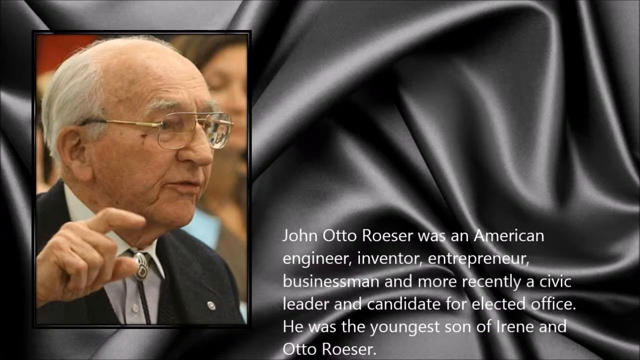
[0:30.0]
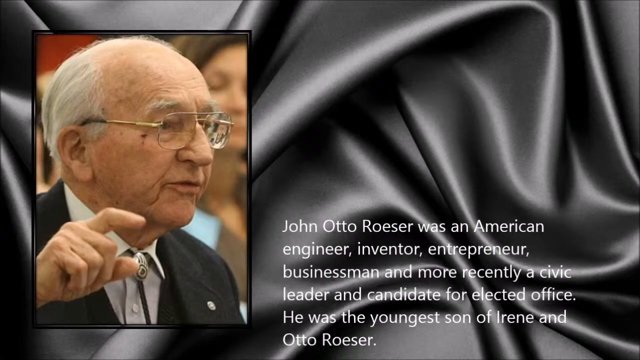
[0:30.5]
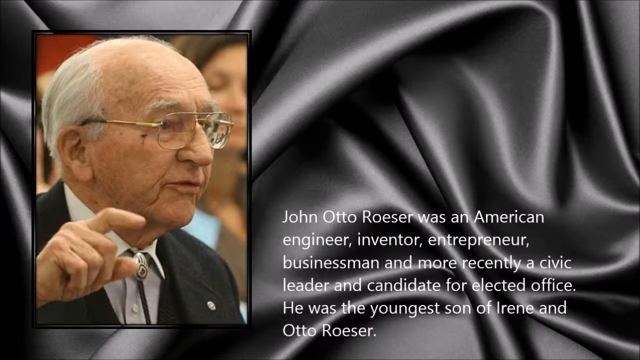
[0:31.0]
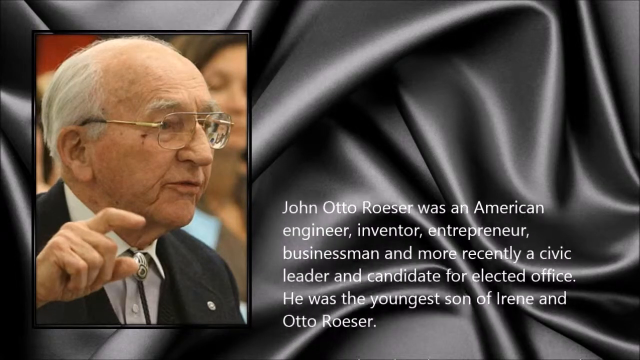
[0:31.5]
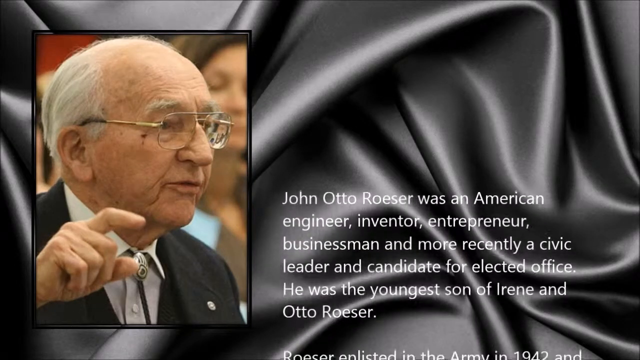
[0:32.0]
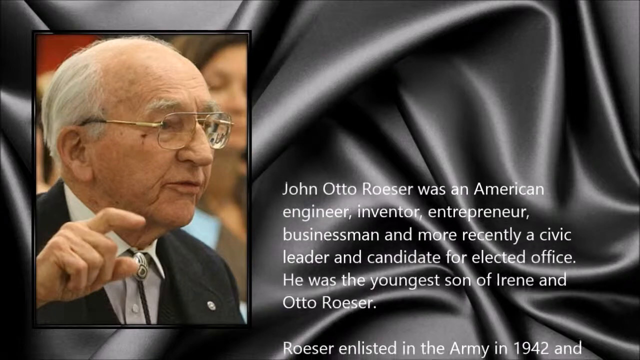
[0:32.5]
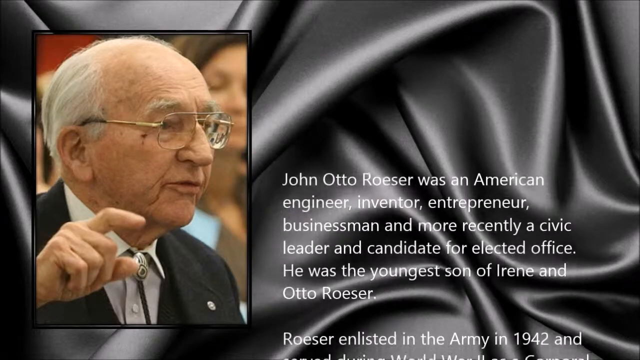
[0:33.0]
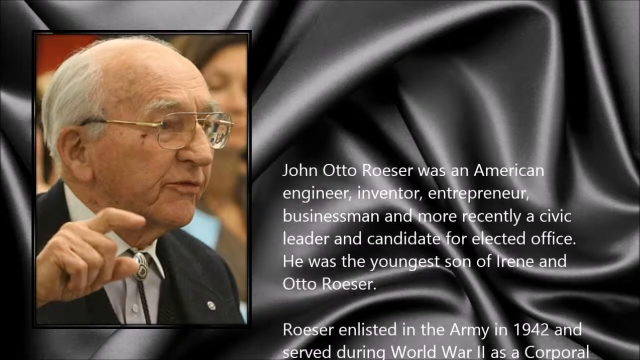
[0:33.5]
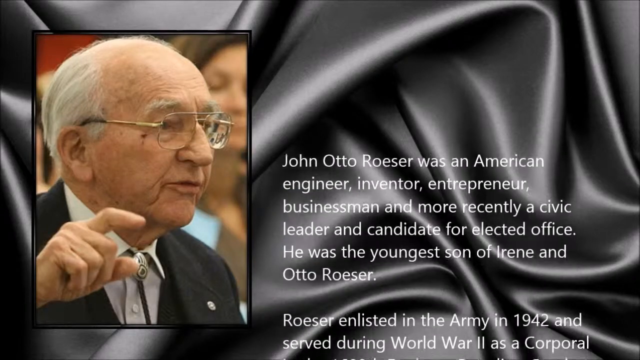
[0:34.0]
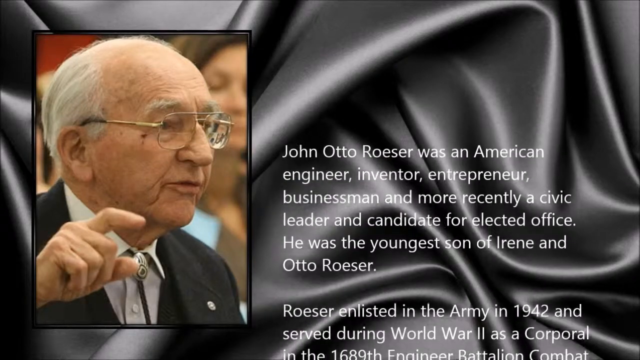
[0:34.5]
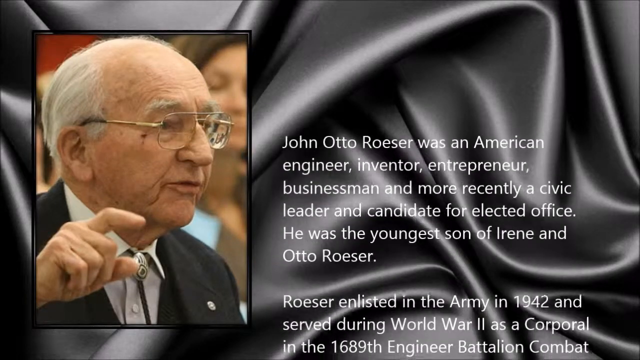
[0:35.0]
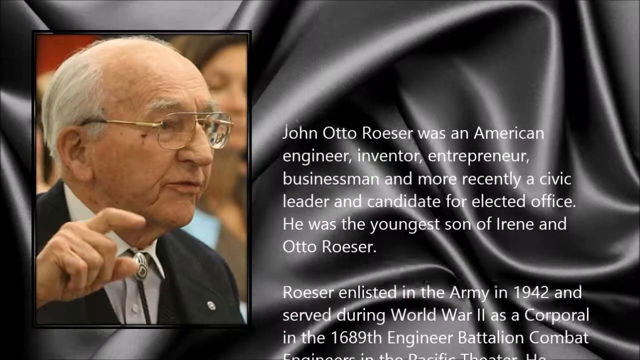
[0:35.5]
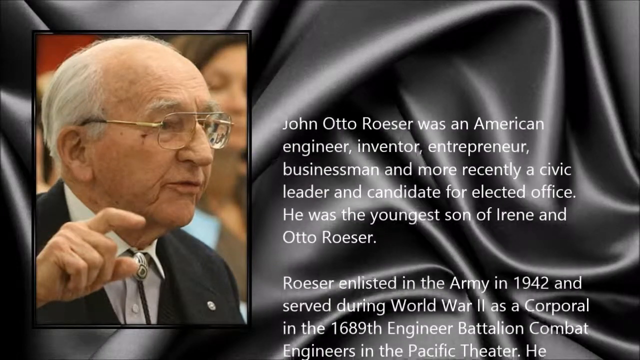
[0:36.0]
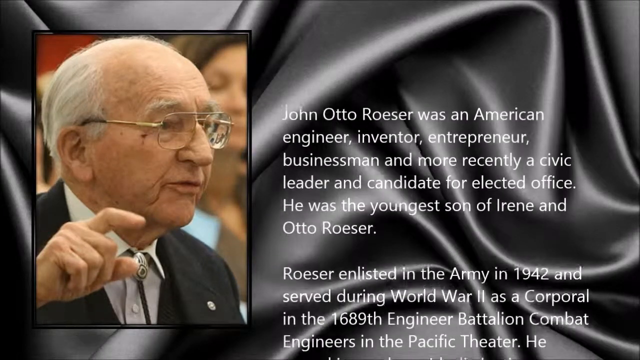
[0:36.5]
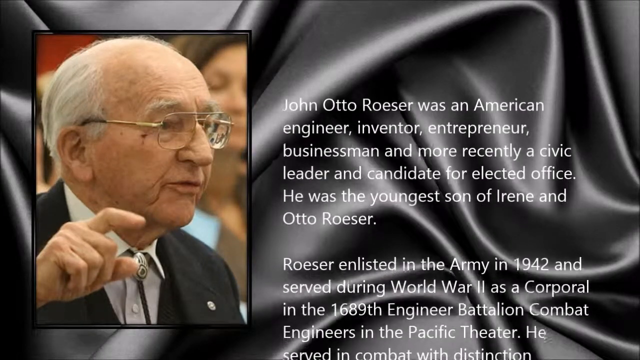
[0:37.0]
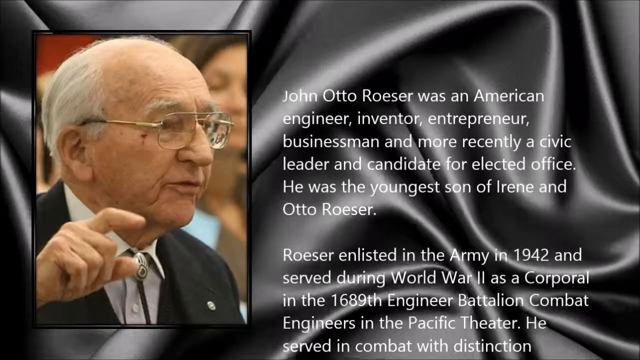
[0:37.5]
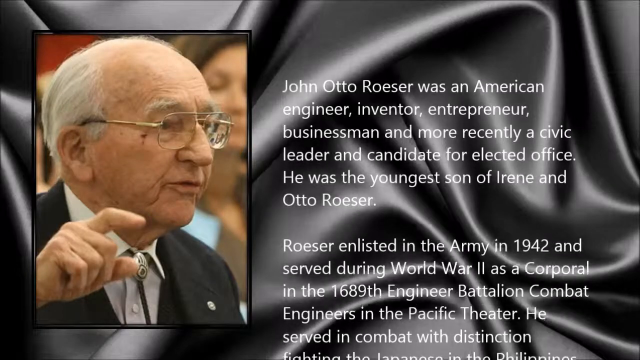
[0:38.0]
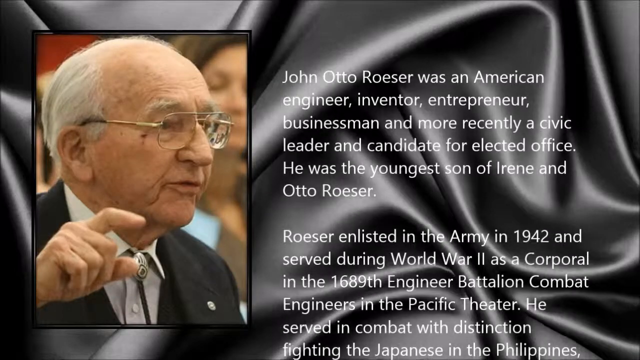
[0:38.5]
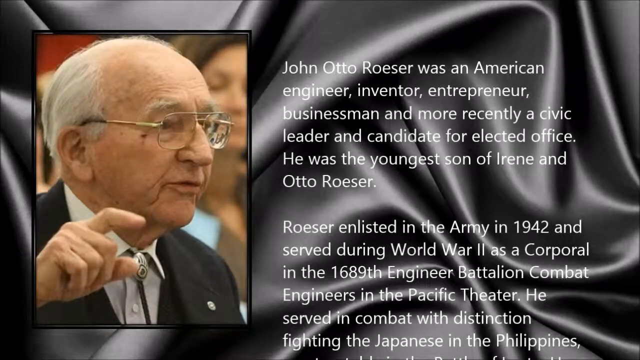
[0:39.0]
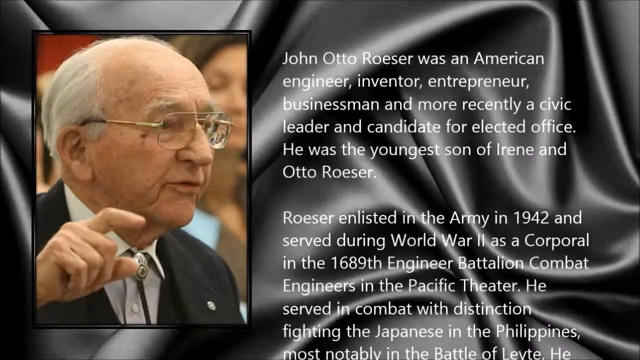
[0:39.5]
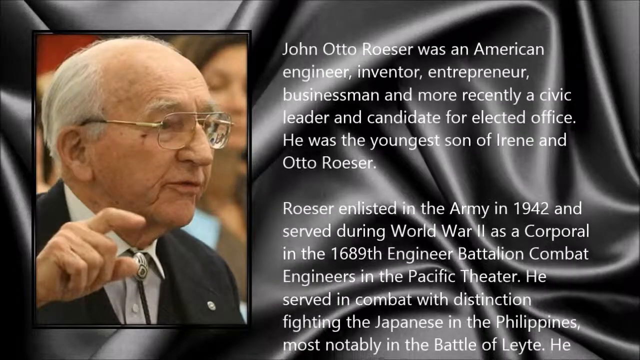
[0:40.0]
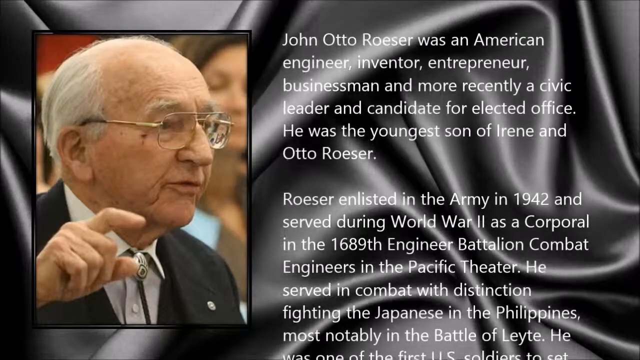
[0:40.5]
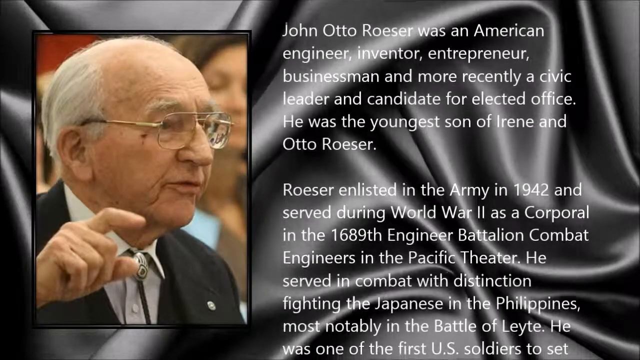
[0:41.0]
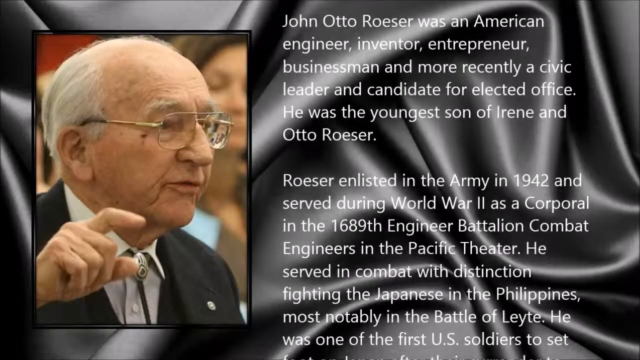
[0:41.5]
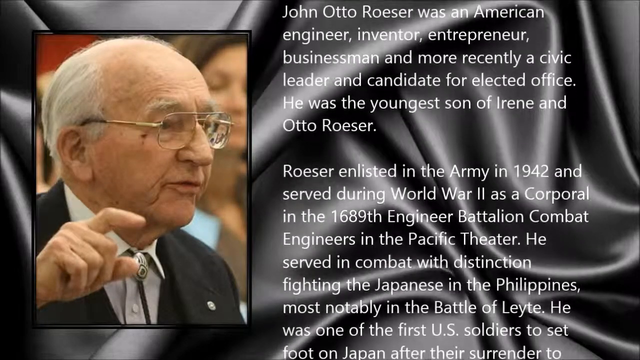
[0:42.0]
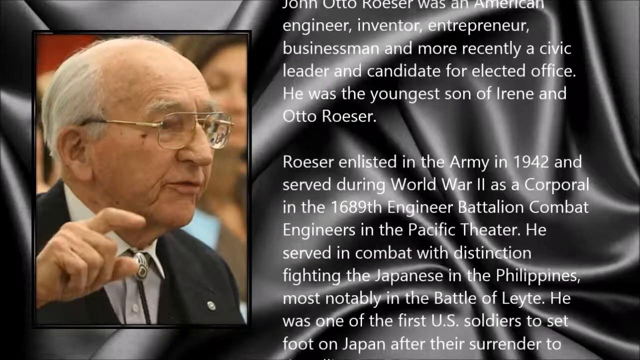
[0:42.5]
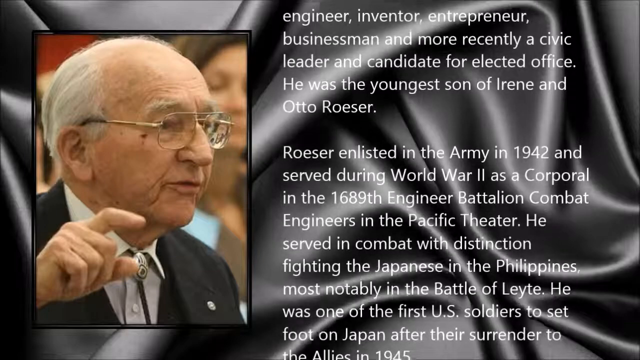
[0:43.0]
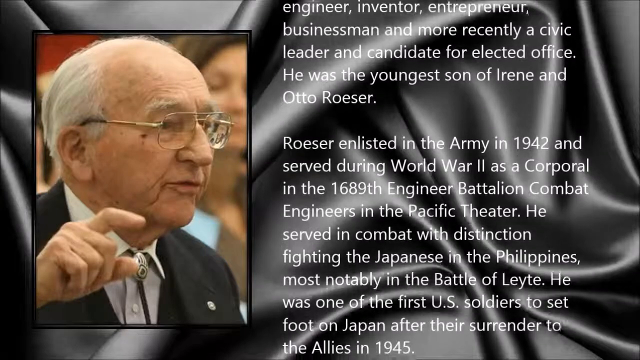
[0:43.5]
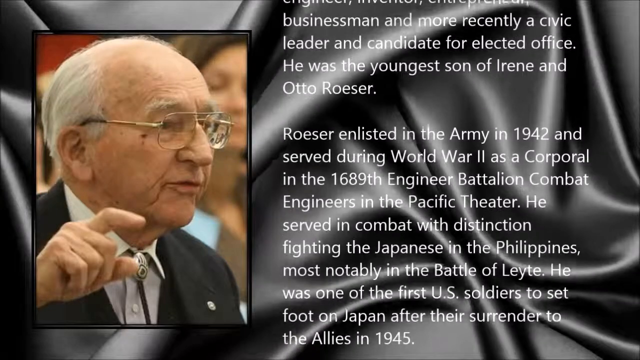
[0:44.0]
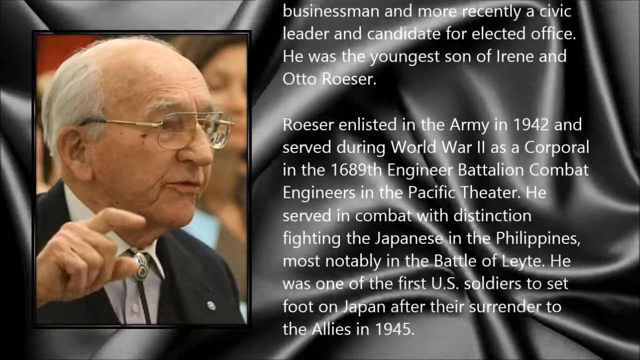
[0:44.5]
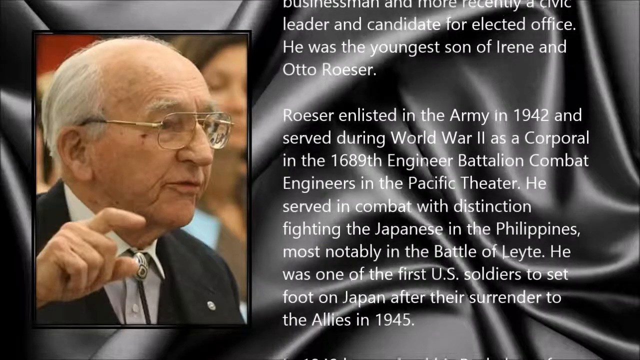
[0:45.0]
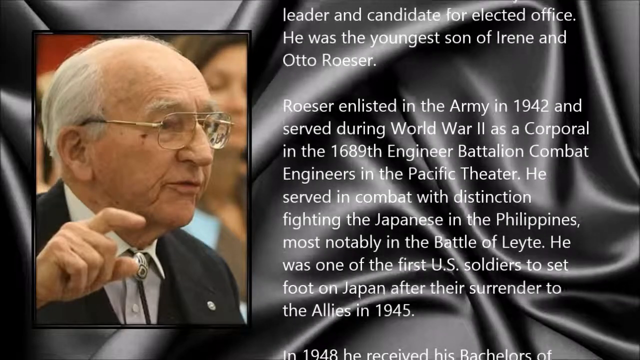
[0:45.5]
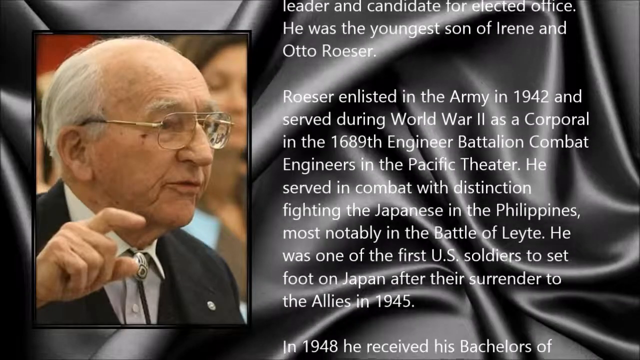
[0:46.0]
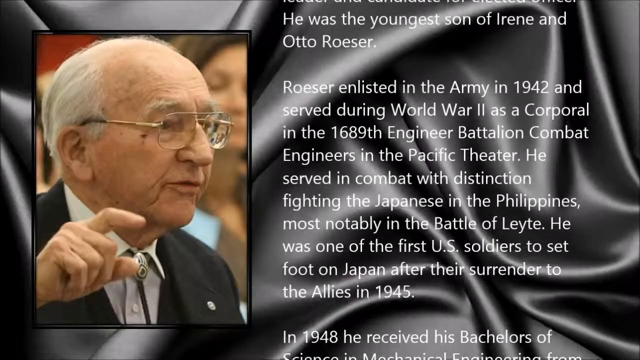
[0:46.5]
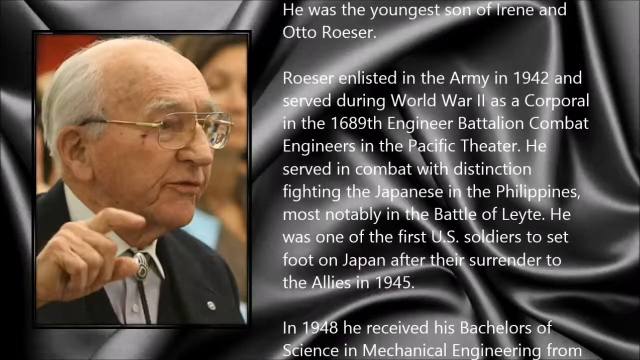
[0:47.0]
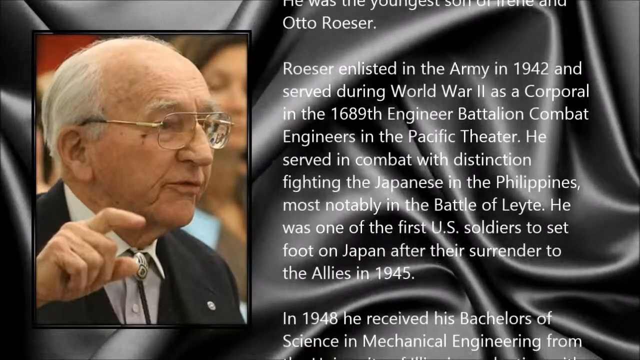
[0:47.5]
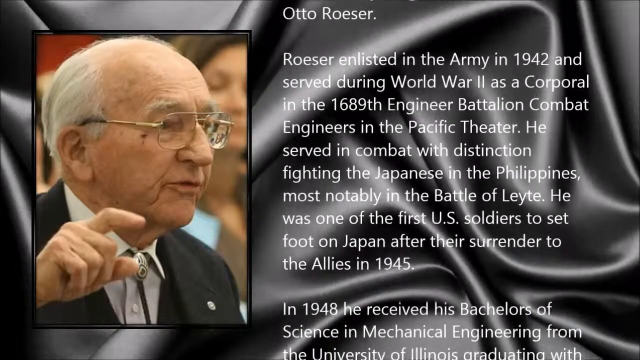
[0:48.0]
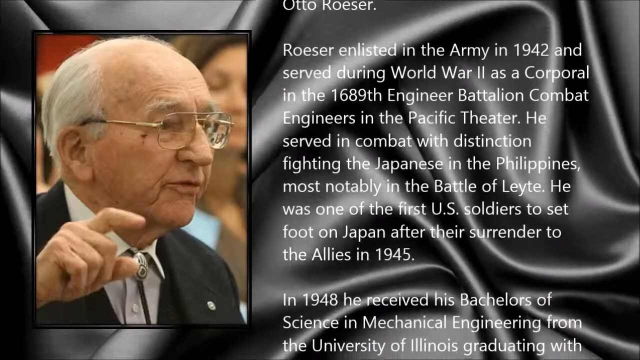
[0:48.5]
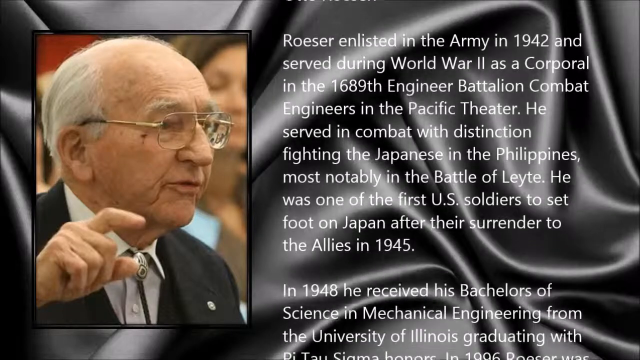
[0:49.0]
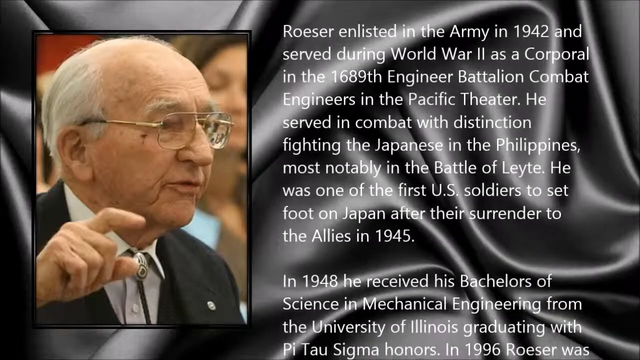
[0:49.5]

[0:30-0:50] The text keeps scrolling up the right side of the screen, reading: "He was the youngest son of Irene and Otto Roser. Roser enlisted in the army in 1942 and served during World War II as a corporal in the 1689th Engineer Battalion Combat Engineers in the Pacific Theater. He served in combat with distinction, fighting the Japanese in the Philippines, most notably in the Battle of Leyte. He was one of the first U.S. soldiers to set foot on Japan after their surrender to the Allies in 1945. In 1948, he received his bachelor's of science in mechanical engineering from the University of Illinois, graduating with Pi Tau Sigma honors." On the left side of the screen is a picture of him as an old man, pointing at whoever he is speaking to.